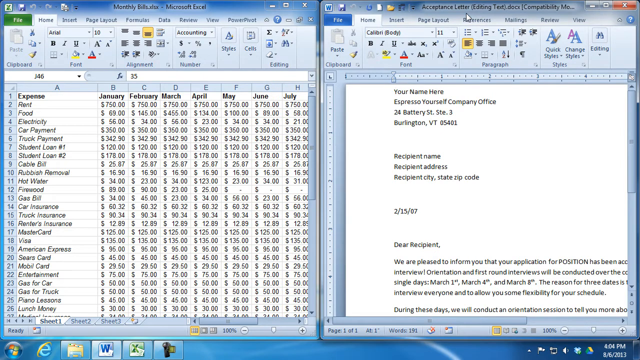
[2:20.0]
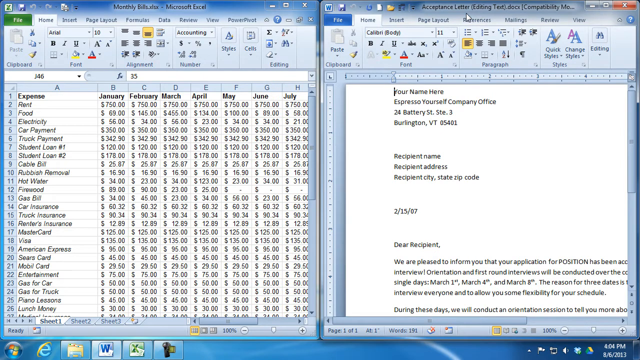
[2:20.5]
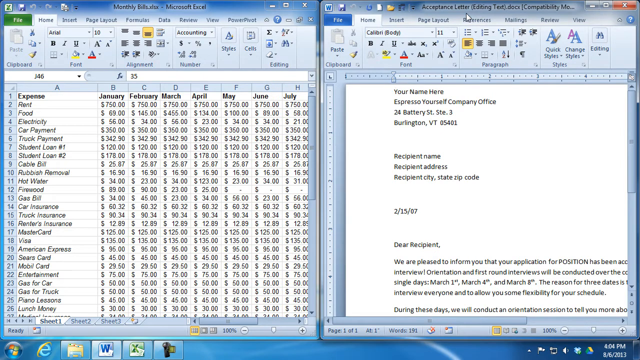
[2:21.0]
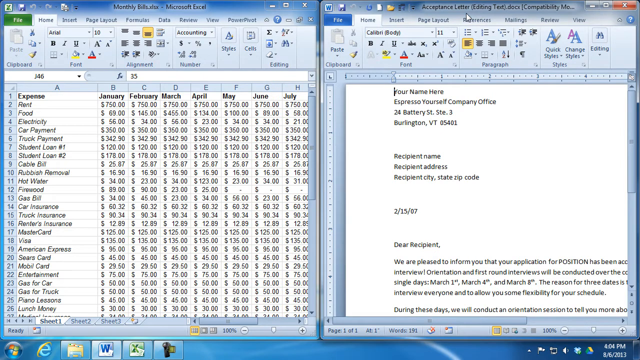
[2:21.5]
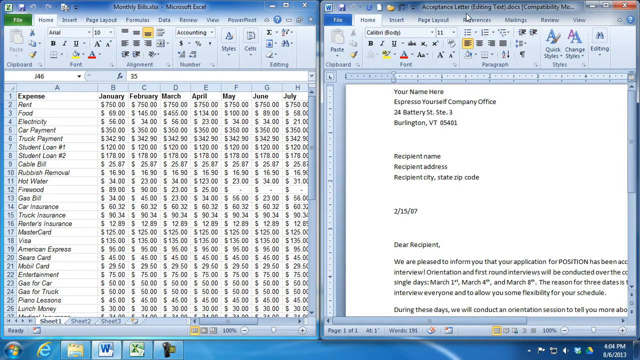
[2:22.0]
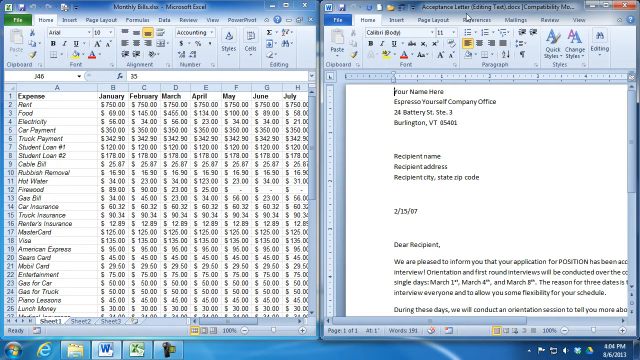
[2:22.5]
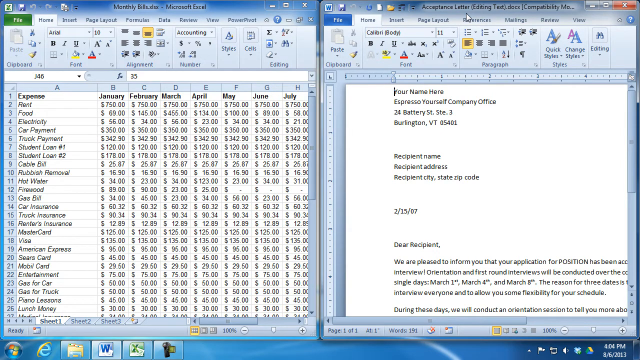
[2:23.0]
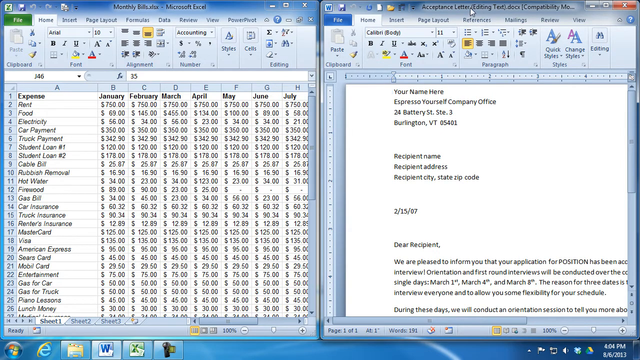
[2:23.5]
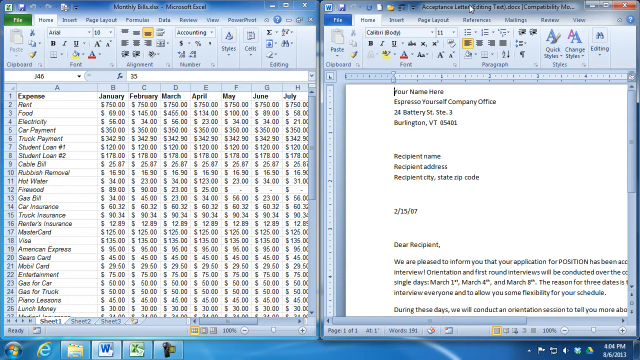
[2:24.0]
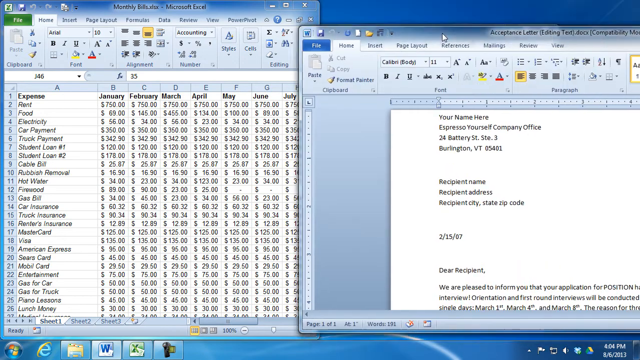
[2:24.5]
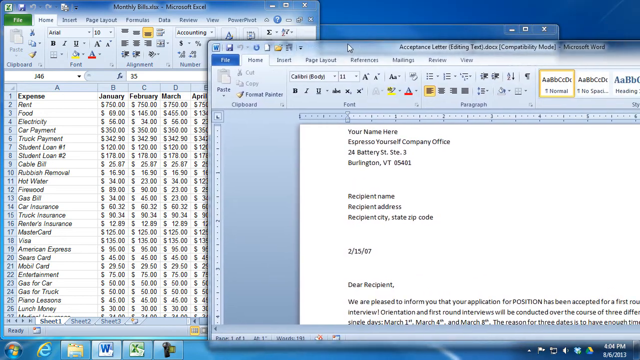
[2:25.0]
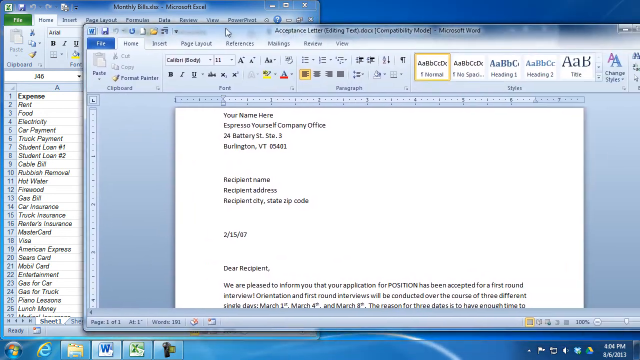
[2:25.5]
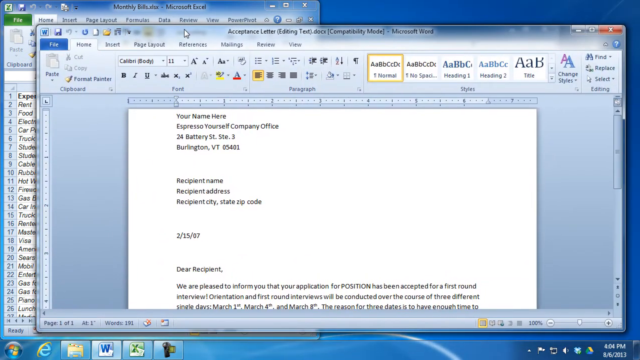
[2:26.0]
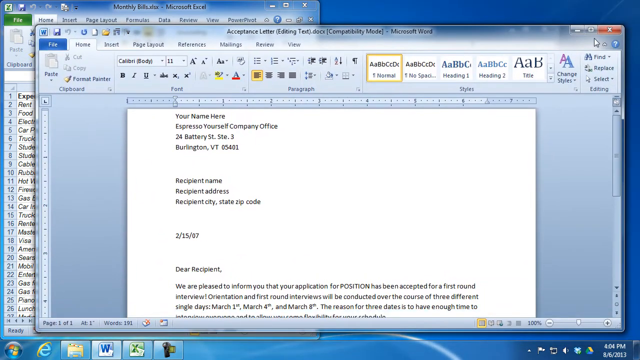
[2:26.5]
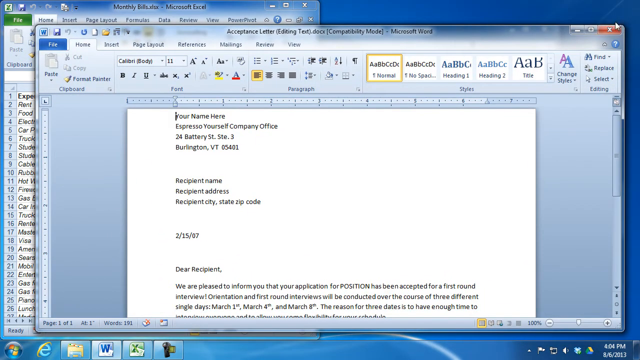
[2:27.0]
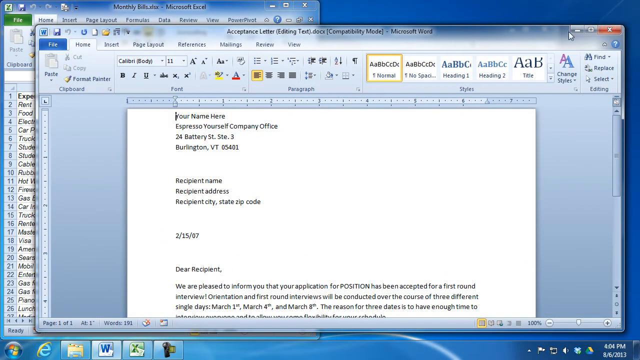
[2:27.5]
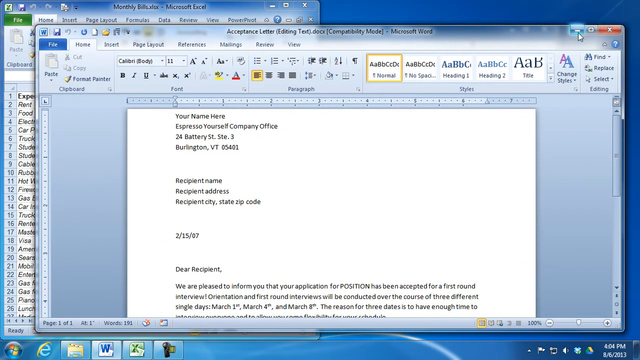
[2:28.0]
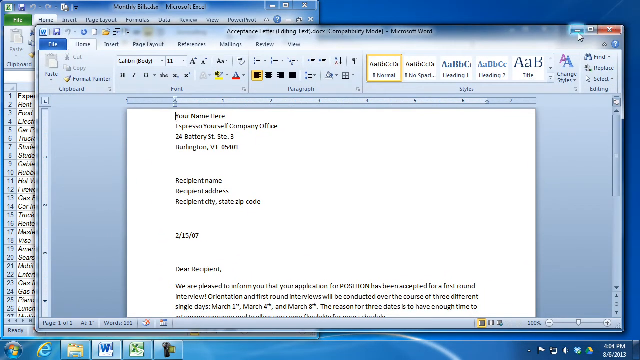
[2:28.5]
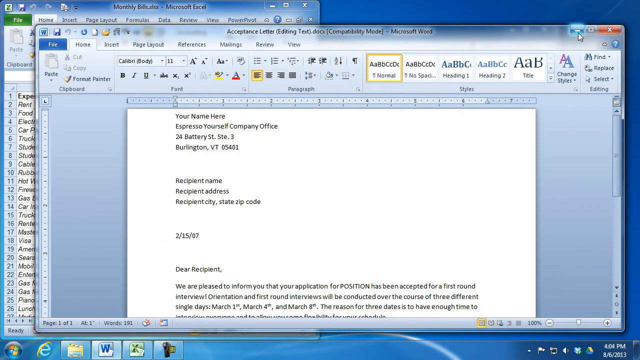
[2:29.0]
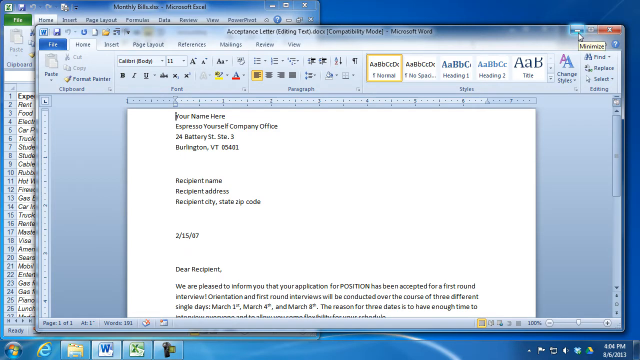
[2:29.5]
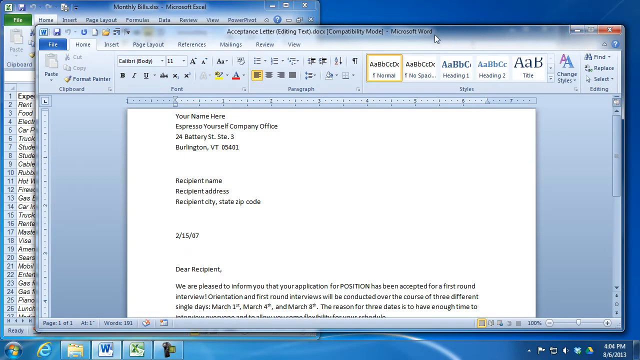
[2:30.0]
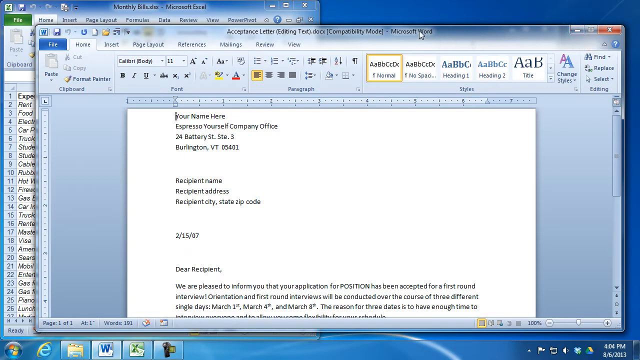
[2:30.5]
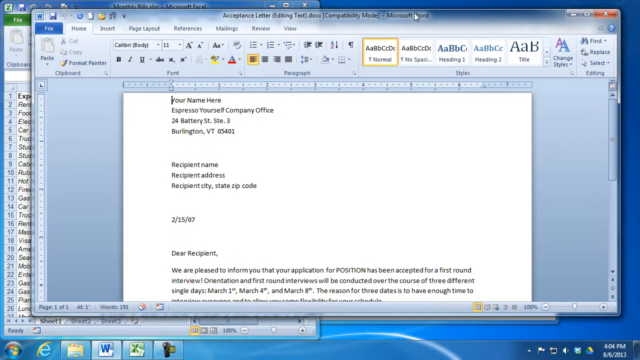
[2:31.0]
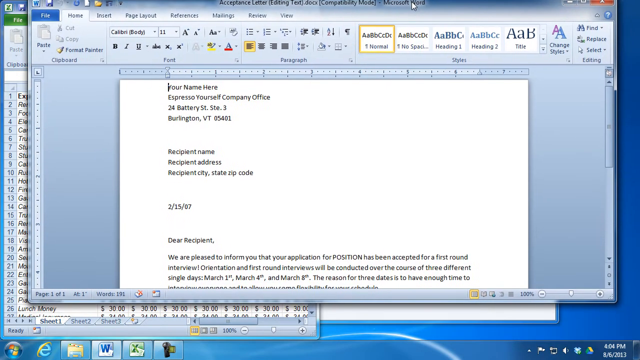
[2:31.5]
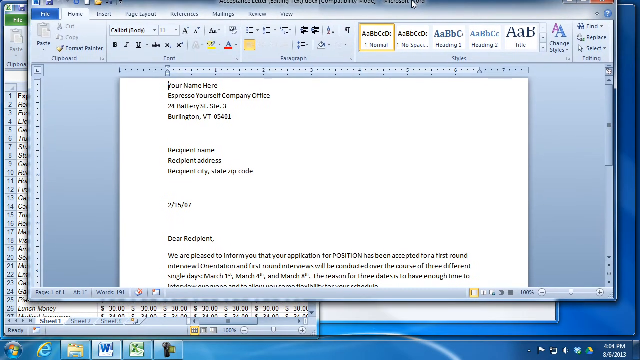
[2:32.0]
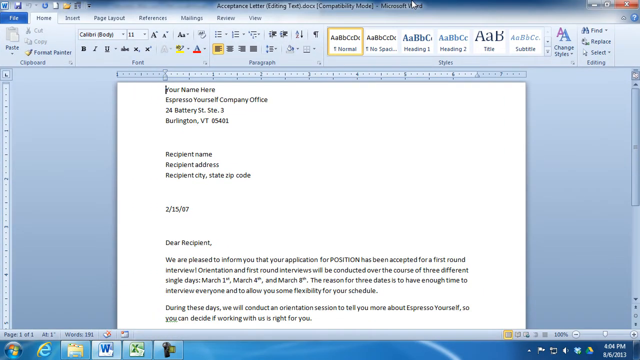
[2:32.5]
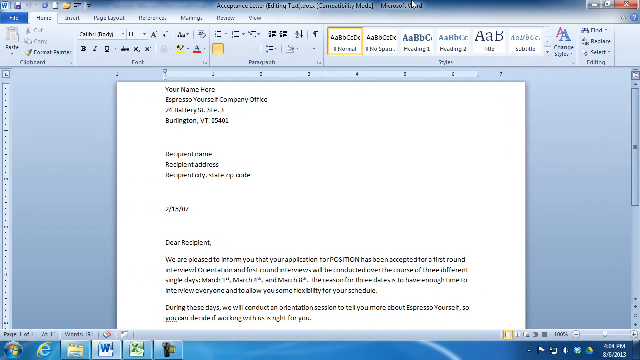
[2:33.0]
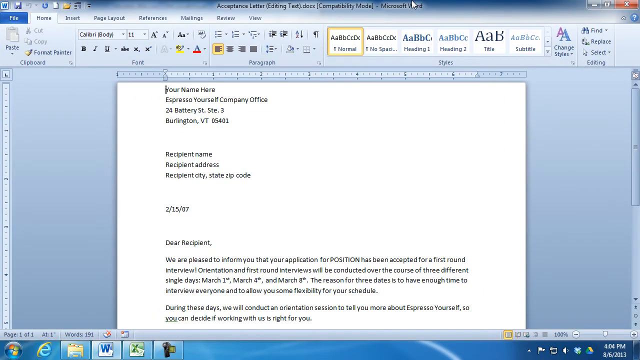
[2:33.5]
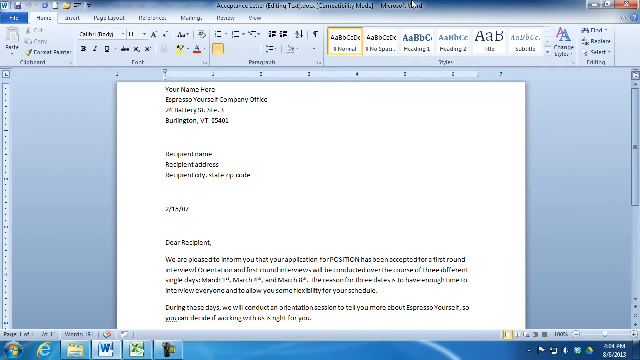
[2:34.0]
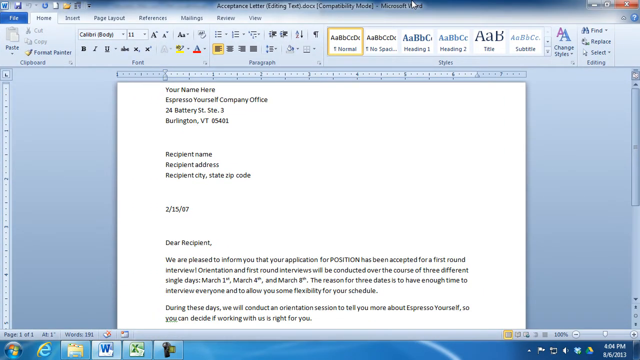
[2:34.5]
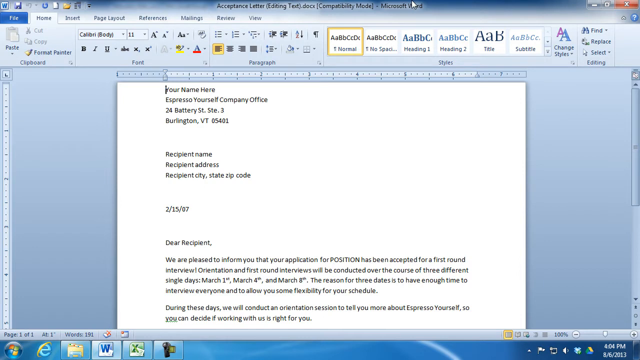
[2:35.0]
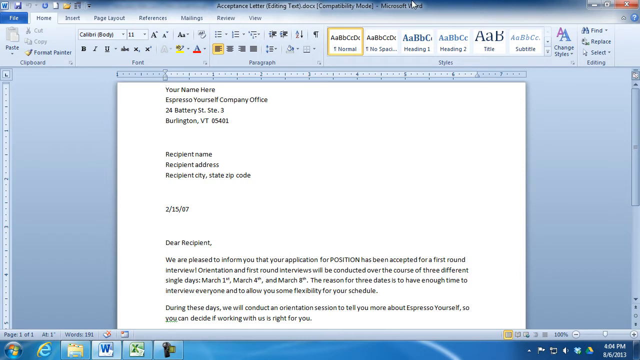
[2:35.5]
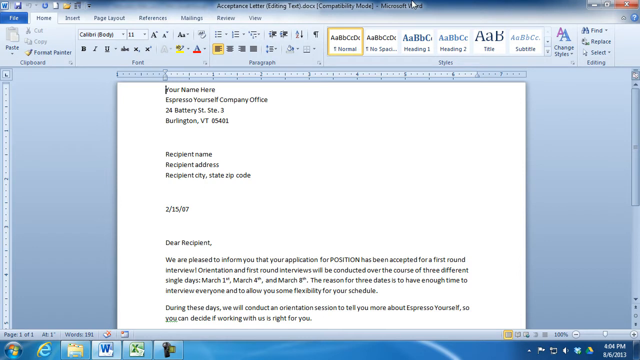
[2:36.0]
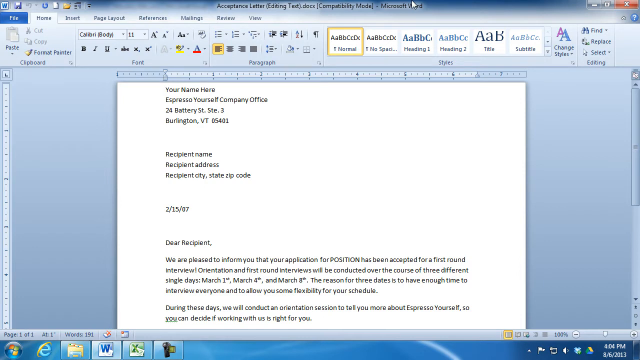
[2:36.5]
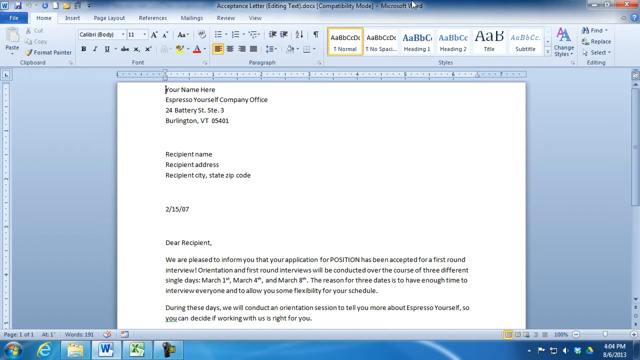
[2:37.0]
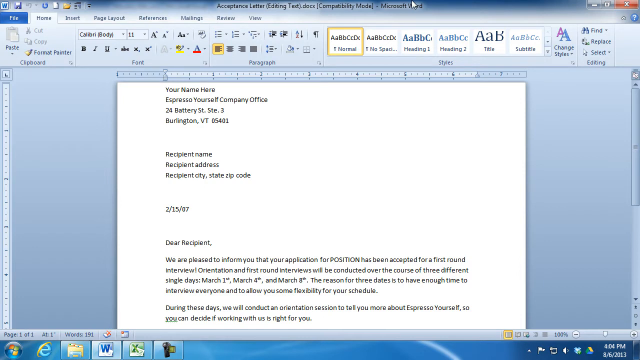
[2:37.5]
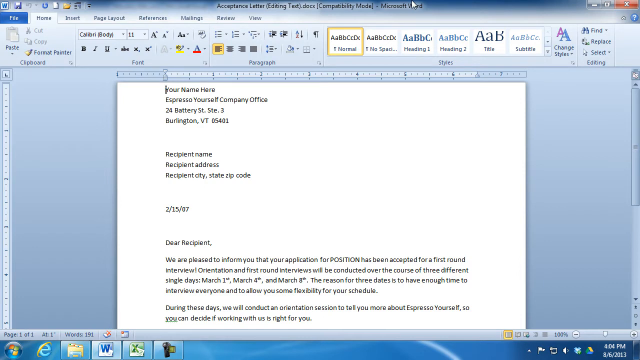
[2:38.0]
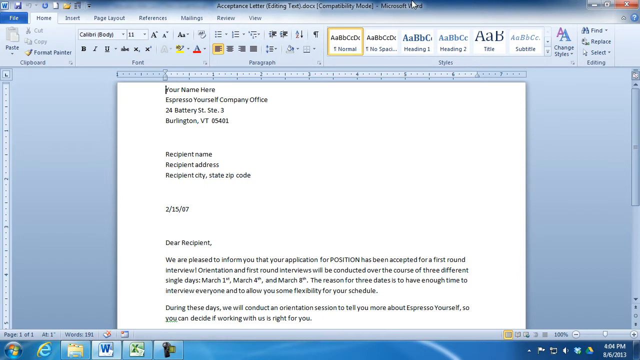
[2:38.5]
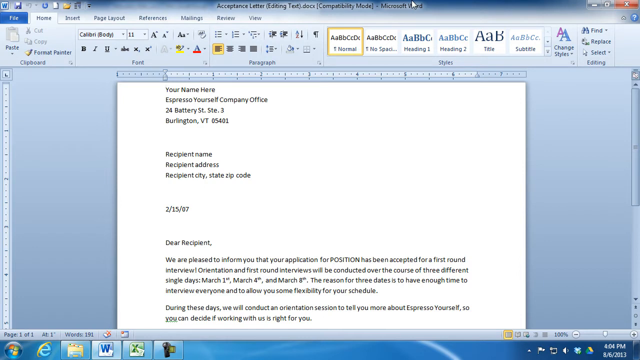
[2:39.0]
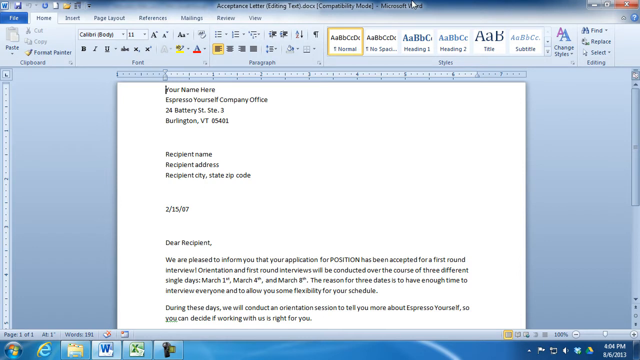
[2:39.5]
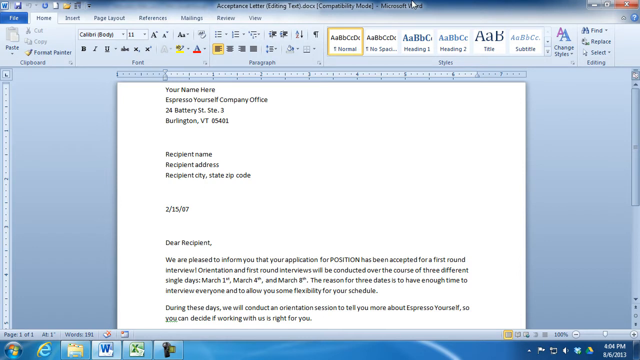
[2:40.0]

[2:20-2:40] The monthly bills spreadsheet is on the left and the acceptance letter on the right. The Excel window is green, matching its green icon, while the Word document is blue. The cursor moves around the acceptance letter's editing title at the top, then clicks and drags the window down and to the left, covering most of the monthly bills so that only home, insert and page layout are visible. The pointer then hovers over the minimize button on the acceptance letter, which turns a light blue, and a small caption pops up that says "minimize". He does not click it; instead, the pointer moves over to "Microsoft Word" at the end of the compatibility mode title. He clicks and drags it up so that about half of the top part of the acceptance letter is cut off. Each window has a vertical scroll bar on the right side with a small blue box on it.